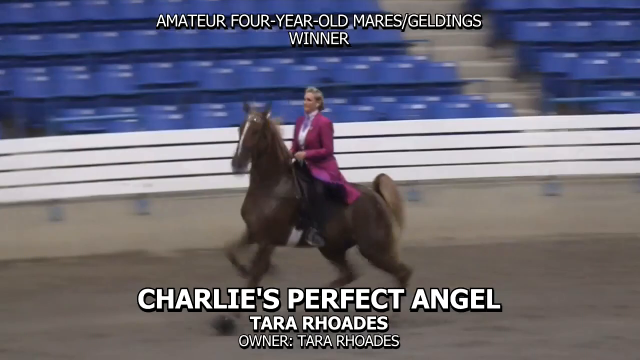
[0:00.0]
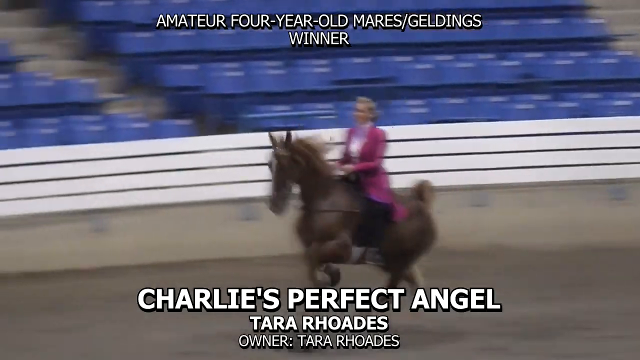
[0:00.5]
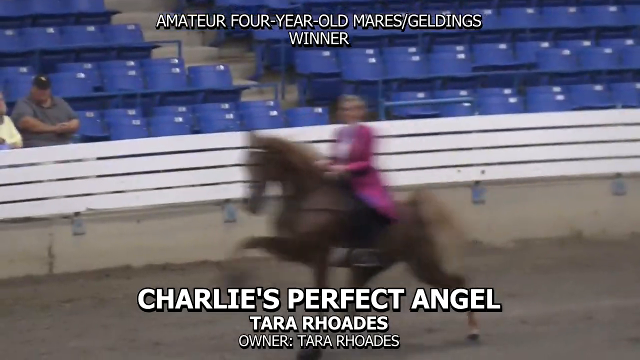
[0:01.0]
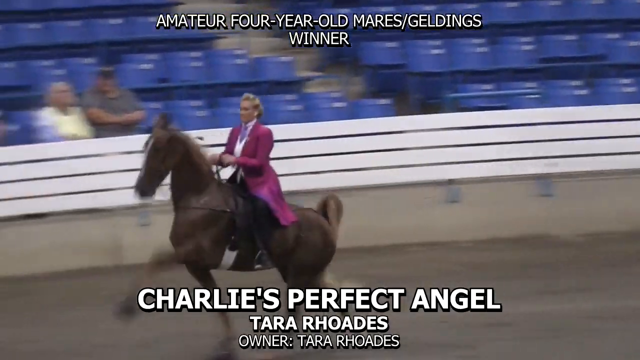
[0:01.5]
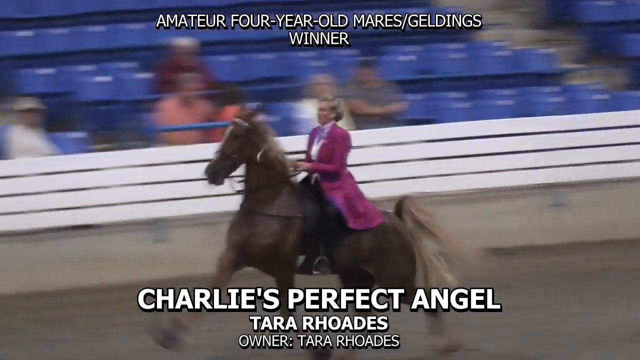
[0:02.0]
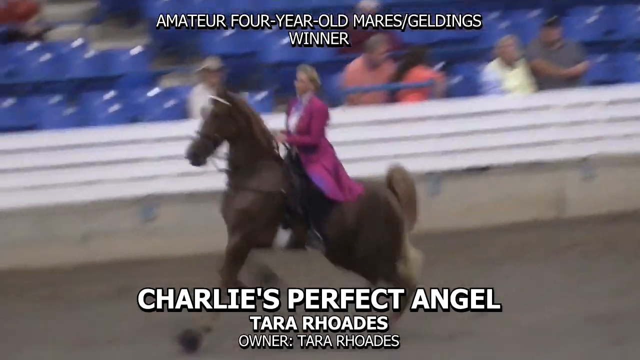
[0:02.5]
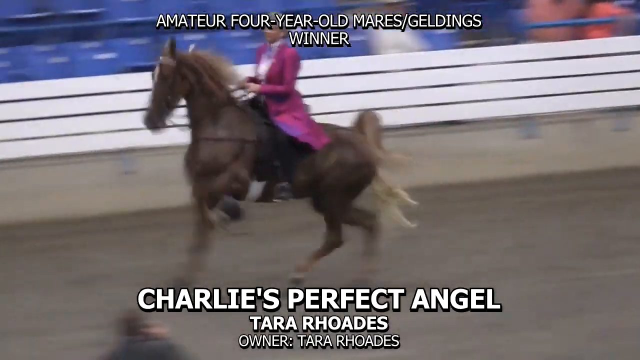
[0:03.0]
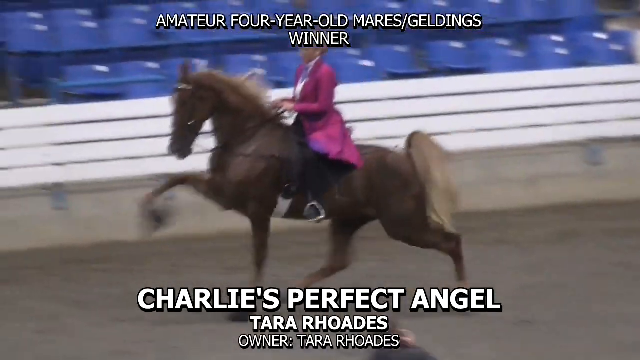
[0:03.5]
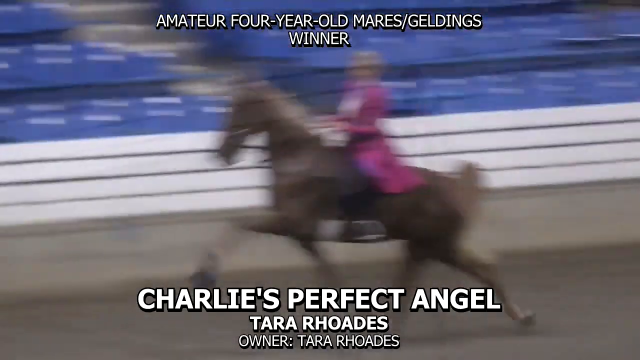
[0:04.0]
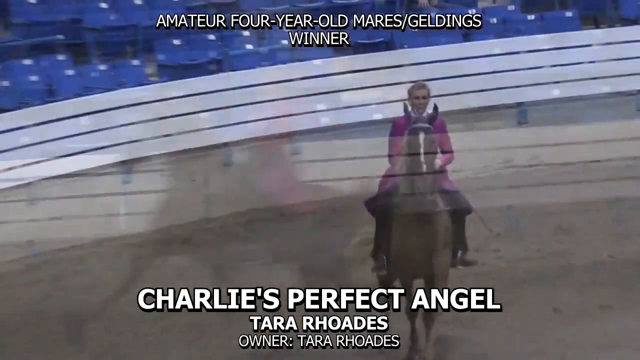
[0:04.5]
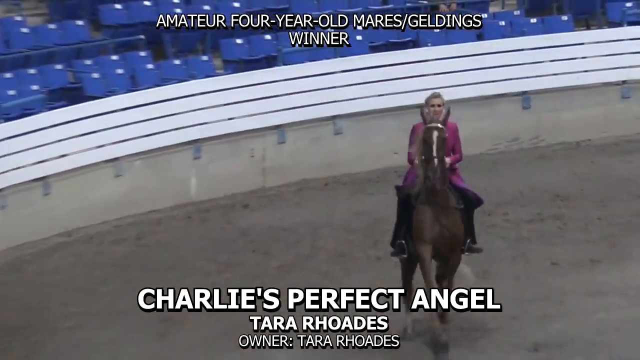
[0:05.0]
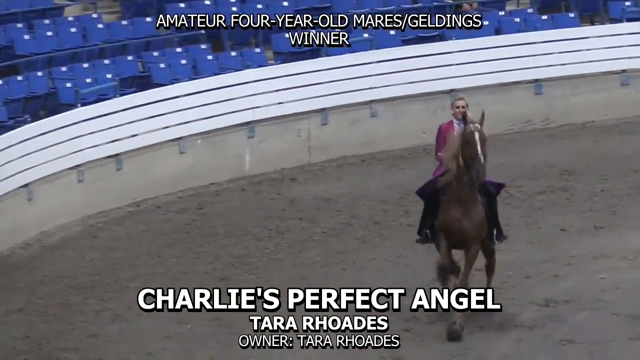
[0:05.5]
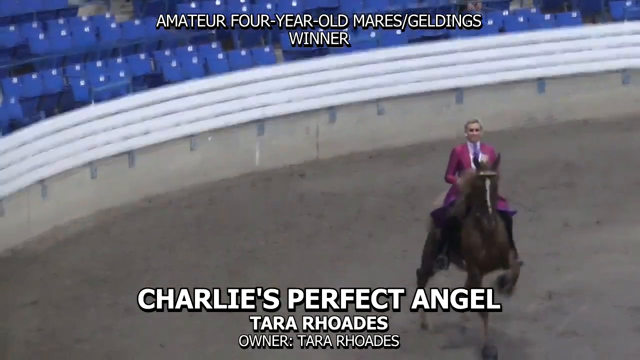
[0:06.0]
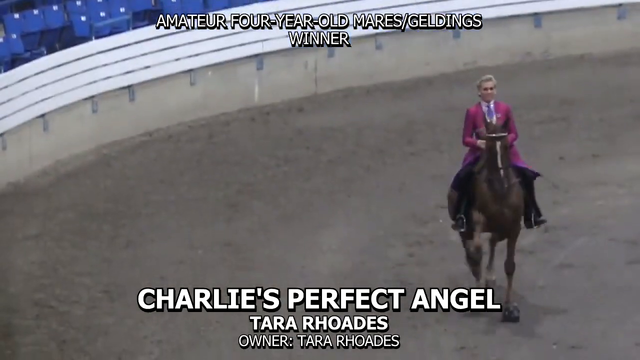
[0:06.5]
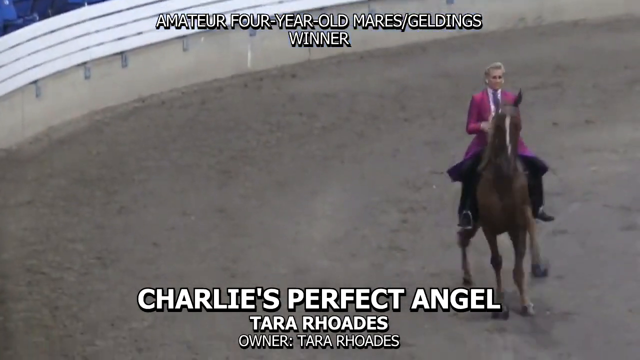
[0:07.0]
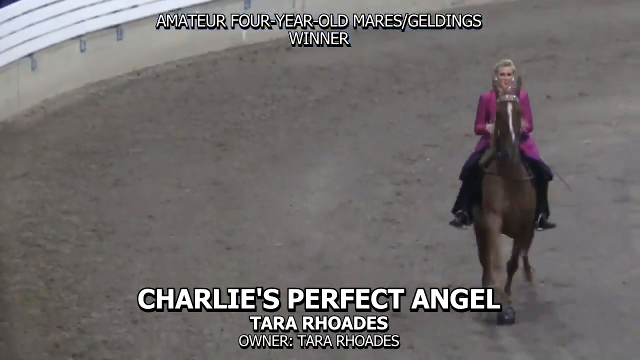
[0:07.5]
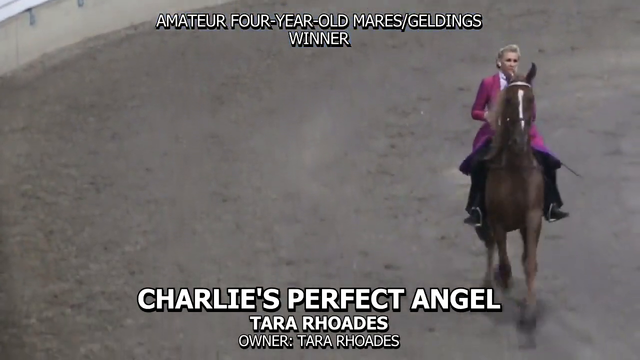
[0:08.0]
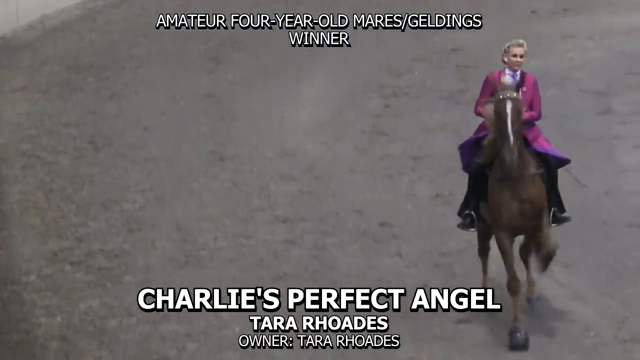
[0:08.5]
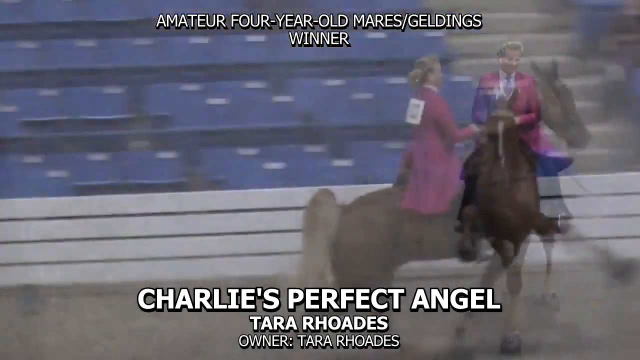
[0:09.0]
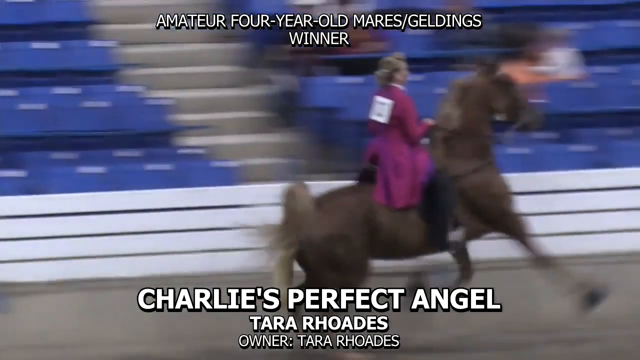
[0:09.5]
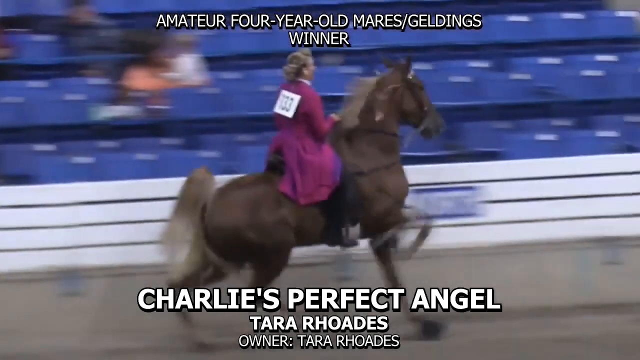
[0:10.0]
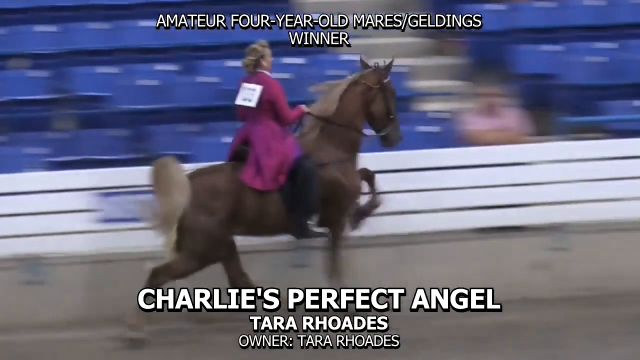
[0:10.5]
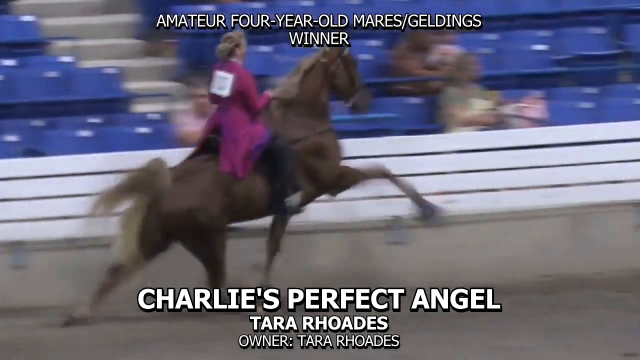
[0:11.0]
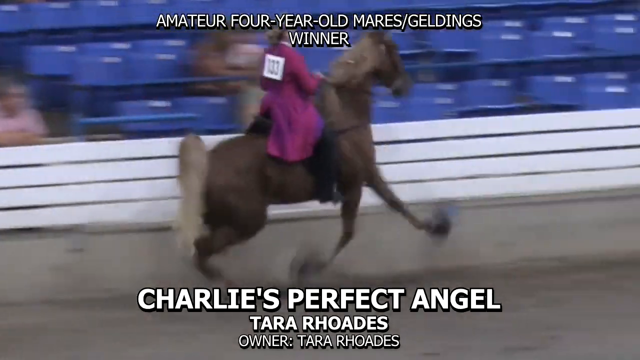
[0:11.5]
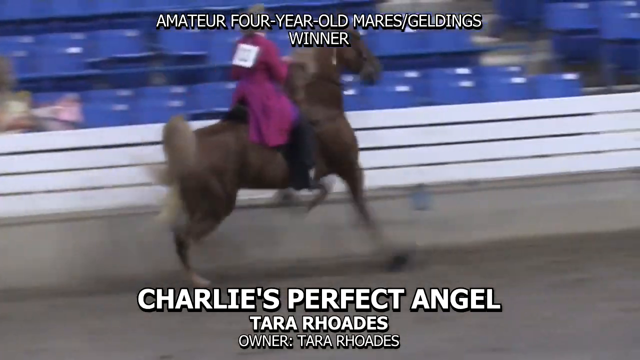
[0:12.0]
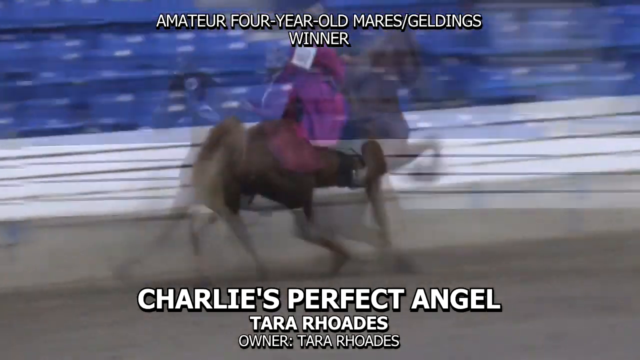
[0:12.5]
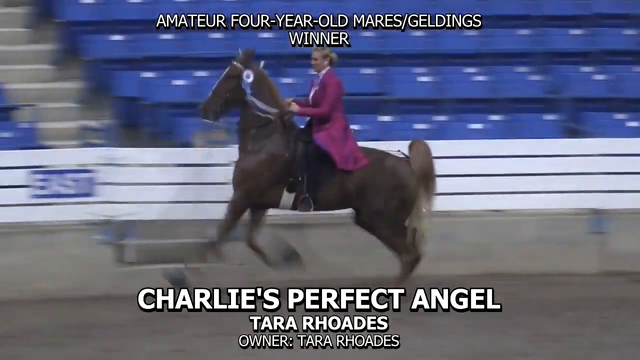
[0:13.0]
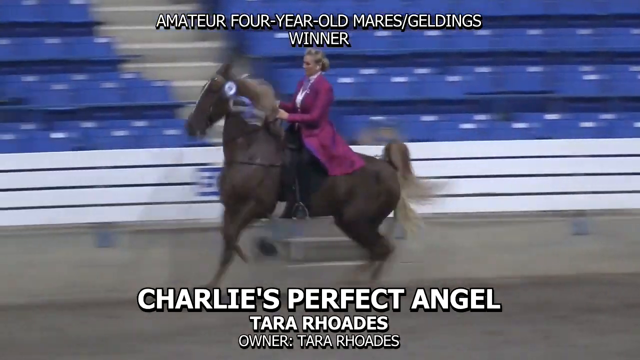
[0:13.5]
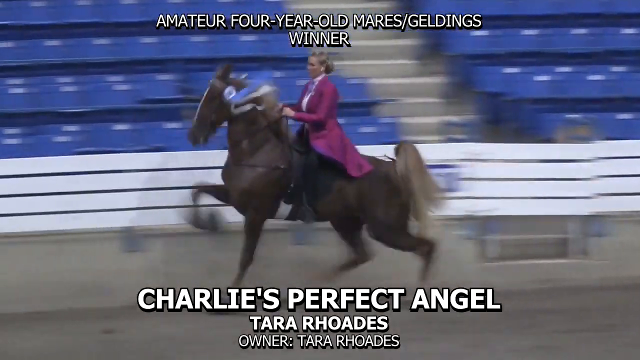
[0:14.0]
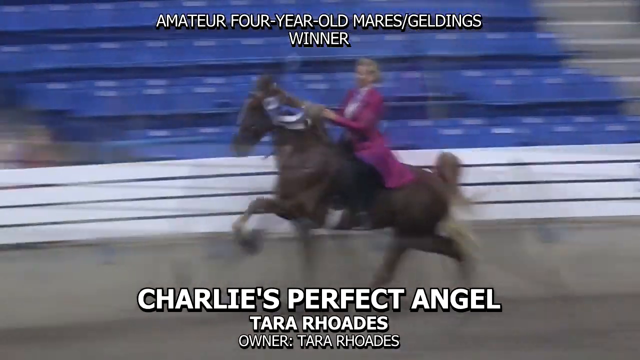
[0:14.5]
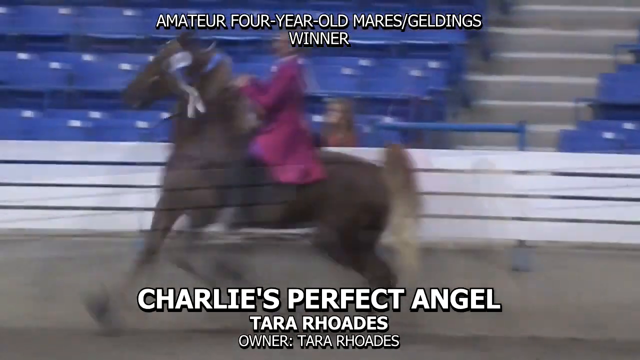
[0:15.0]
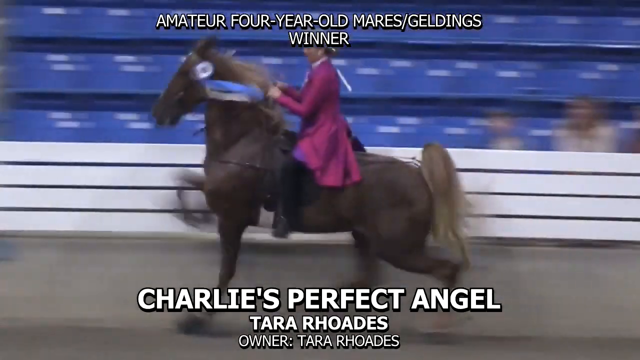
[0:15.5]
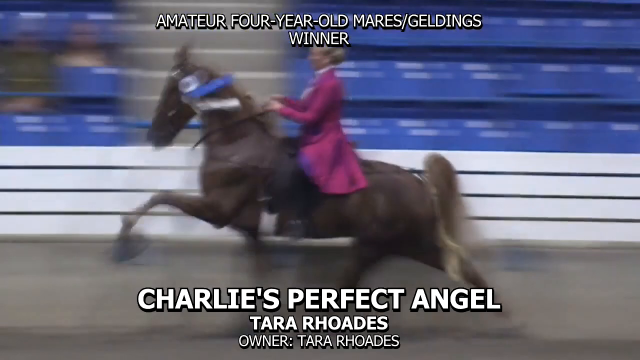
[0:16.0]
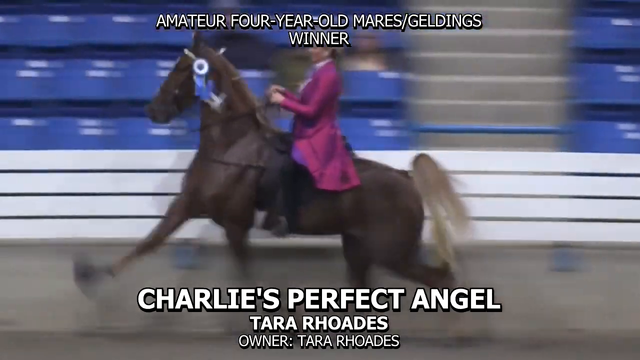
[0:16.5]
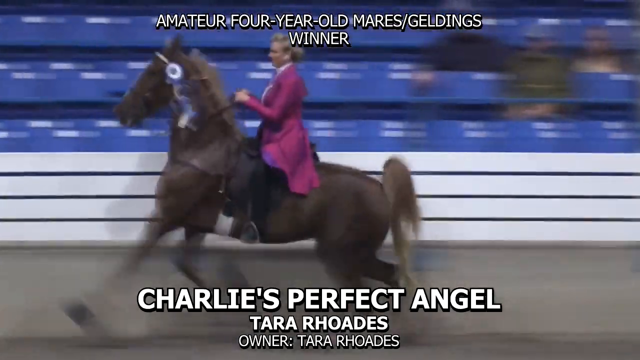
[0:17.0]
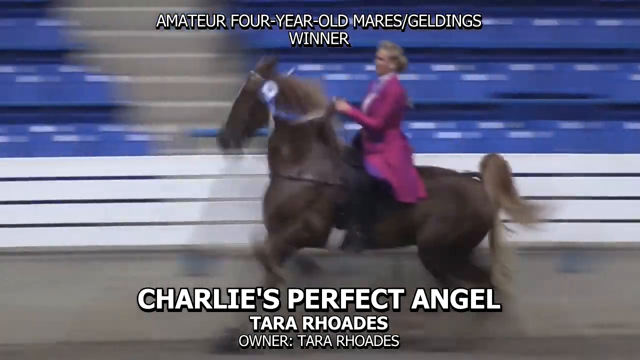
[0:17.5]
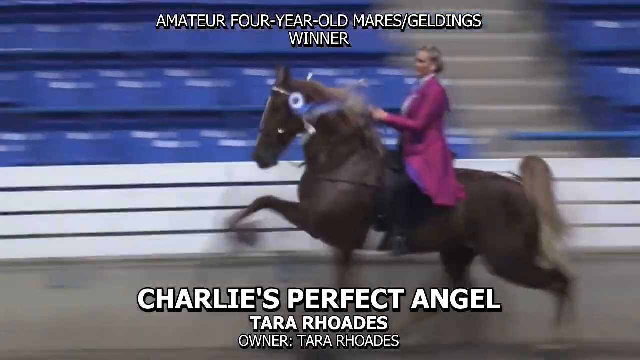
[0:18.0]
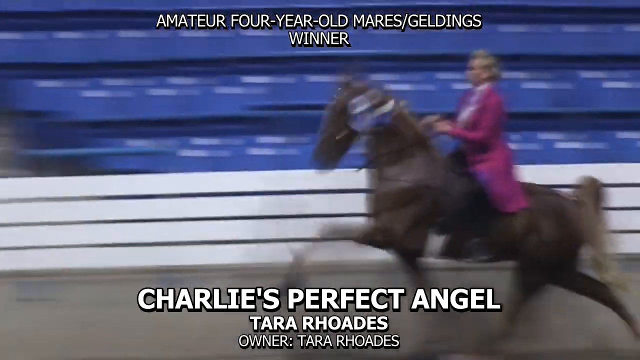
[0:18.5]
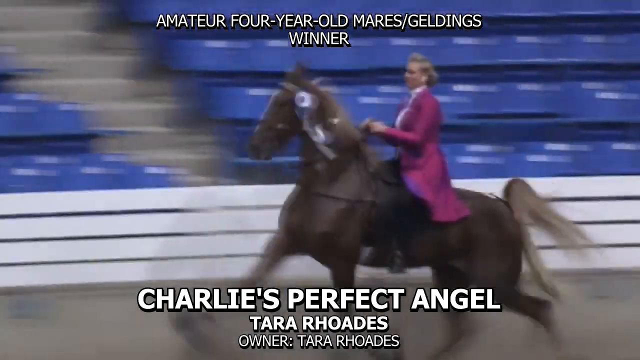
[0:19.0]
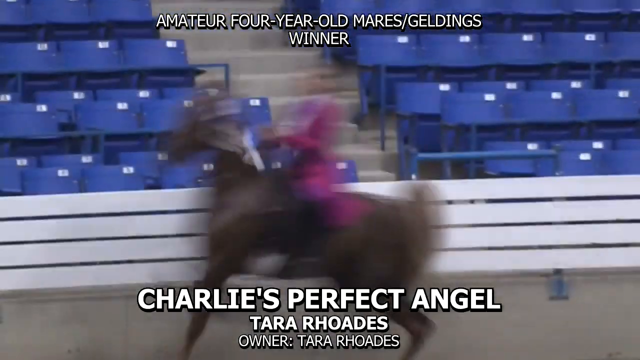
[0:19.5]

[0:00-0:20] A horse is being ridden, but not in a horse race; it is probably more of a performance. On-screen text reads "amateur four-year-old mares gelding winner" and "Charlie's perfect angel Tara Rhodes owner Tara Rhodes." The rider, a woman apparently named Tara, wears a lavender purple jacket. The horse moves with unusual struts, smoothly and without trying to buck her. Its hind legs are held very low, with its rear scooped down, while it high-steps with its front legs and its head bobs back and forth. It is possibly a contest for unique walks that horses are trained to perform.